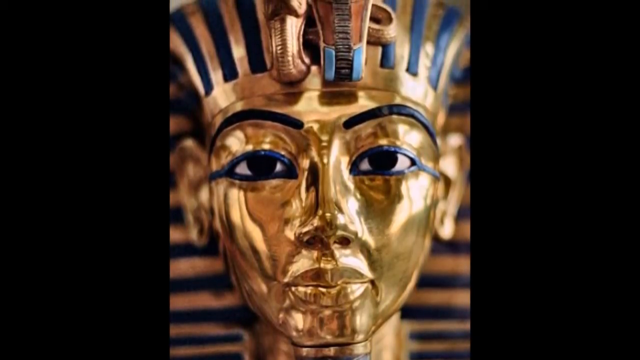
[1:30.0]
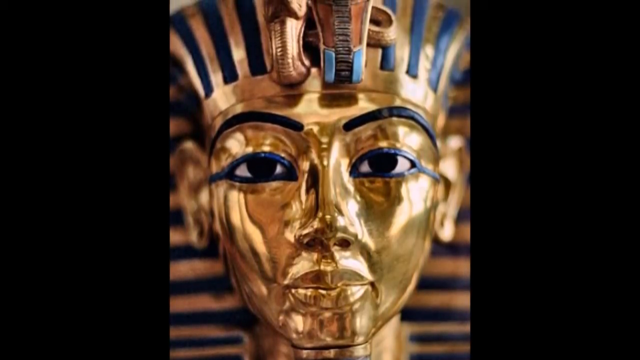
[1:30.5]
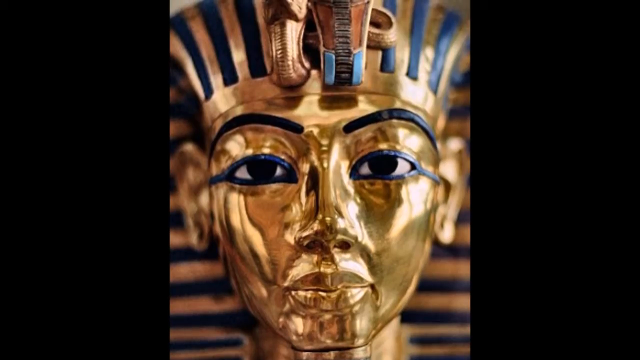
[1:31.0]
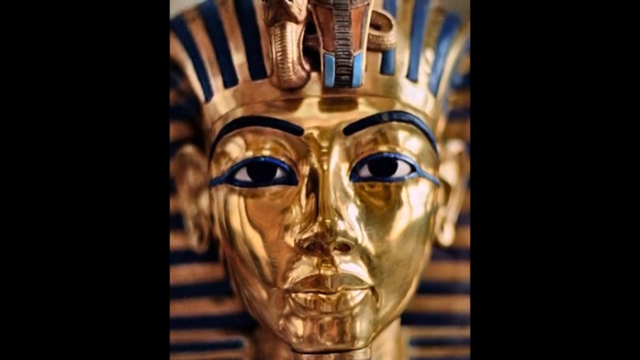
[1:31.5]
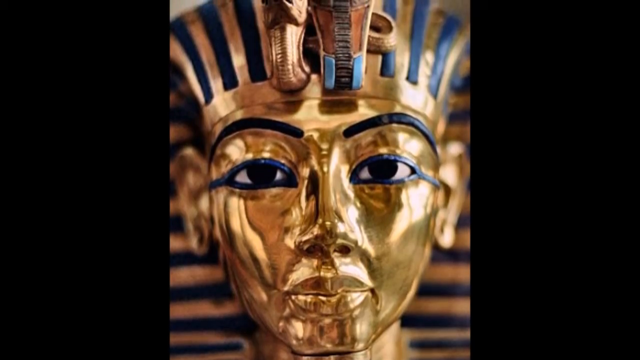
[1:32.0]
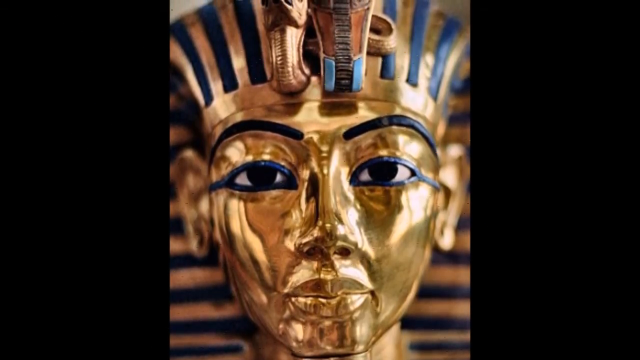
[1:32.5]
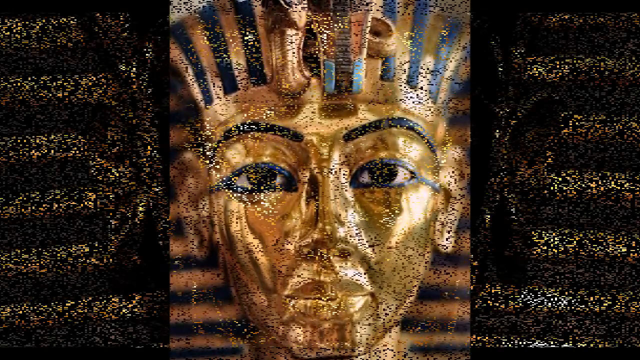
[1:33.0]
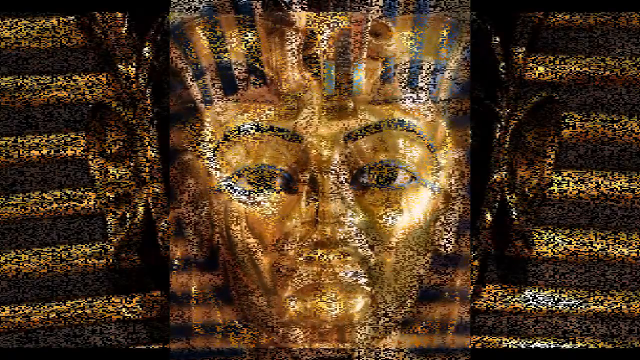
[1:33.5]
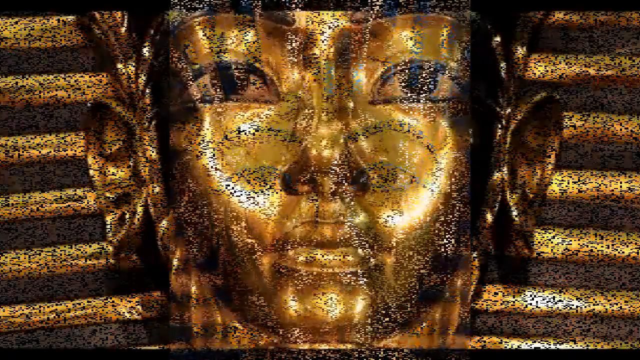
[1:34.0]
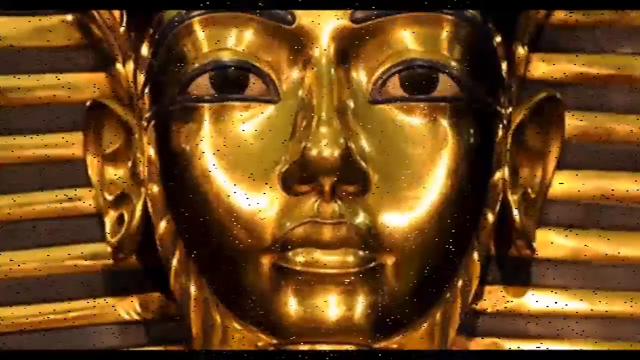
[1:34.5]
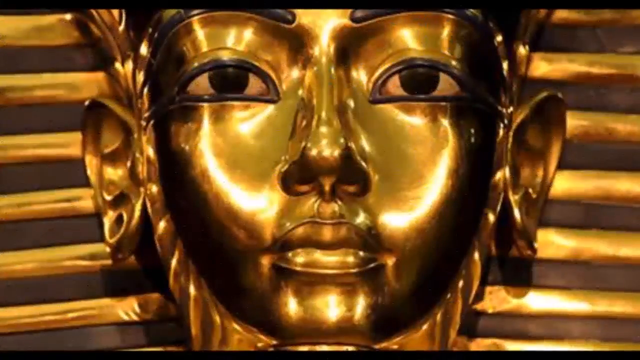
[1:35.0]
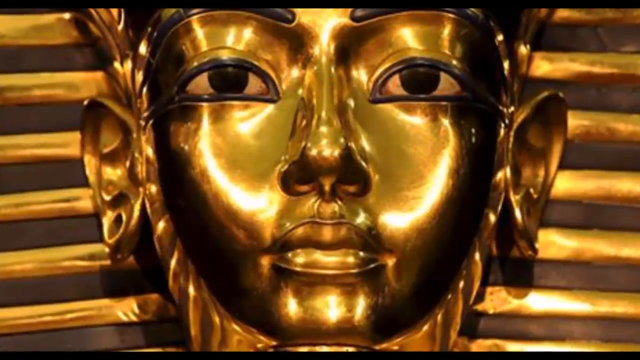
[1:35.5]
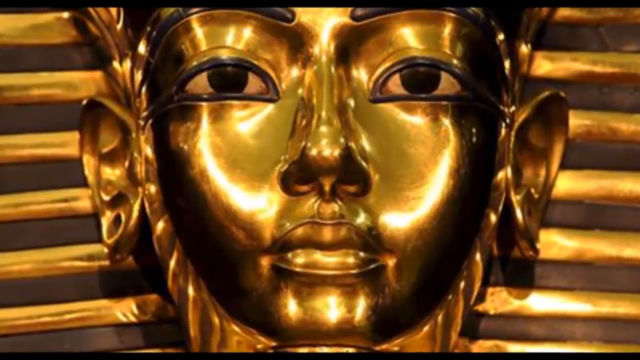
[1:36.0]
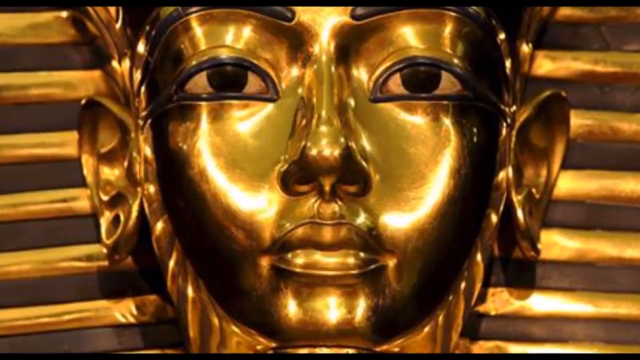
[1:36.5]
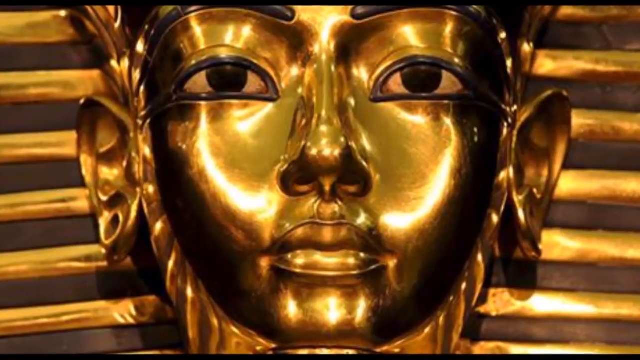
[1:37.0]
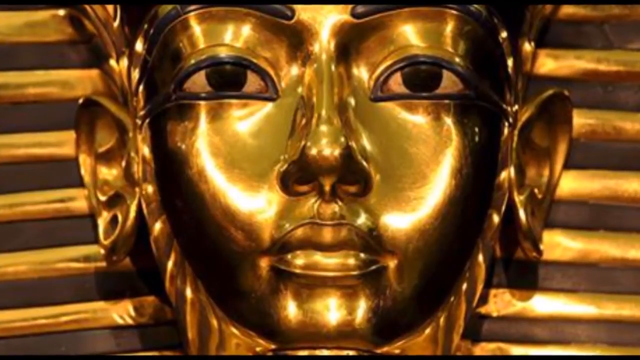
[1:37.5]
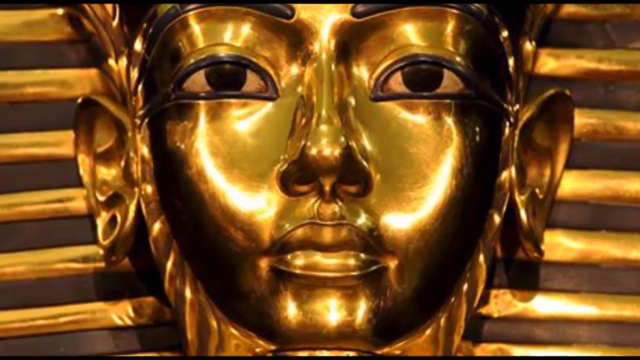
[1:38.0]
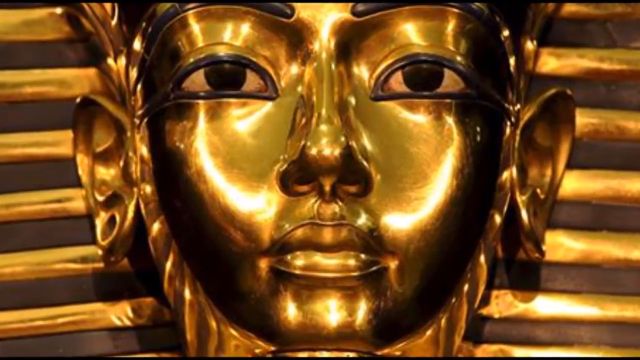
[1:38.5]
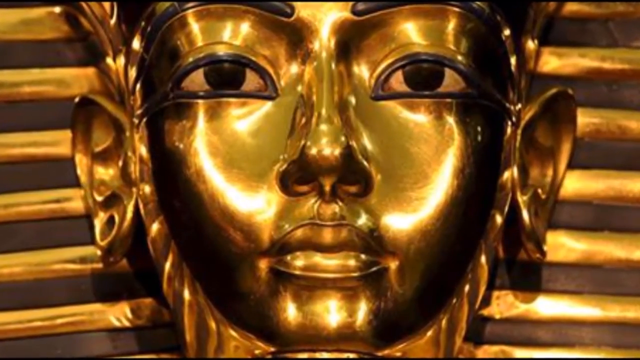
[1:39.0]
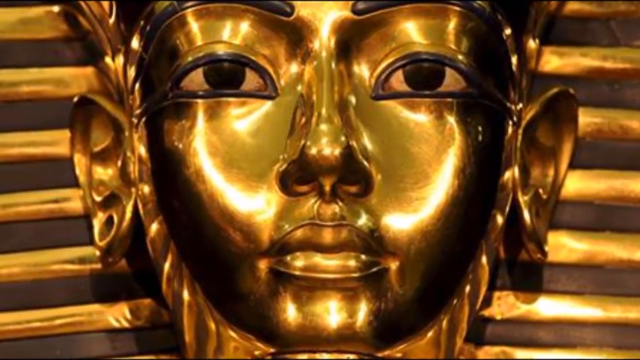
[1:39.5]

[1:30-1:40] A picture shows the golden face of King Tut's tomb, which looks like it has blue eyeliner. At the top of the forehead he appears to wear a headdress with vertical blue and golden lines that turn horizontal behind him. There are two snakes on his forehead, one of which looks like a cobra. The video pans upward, then turns grainy and changes to a zoomed-in view of the tomb face that is all gold with no blue, just some hints of black, giving it a darker tone.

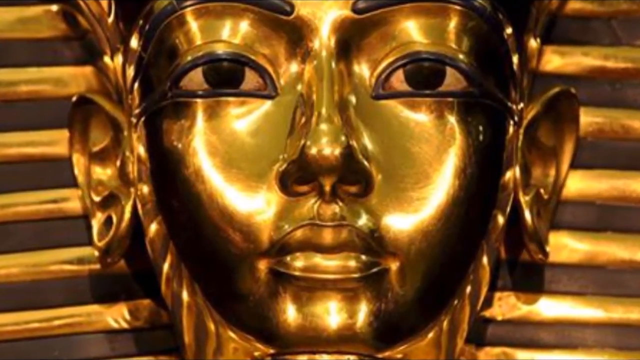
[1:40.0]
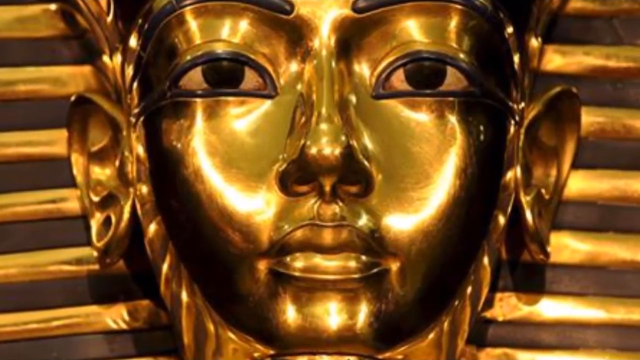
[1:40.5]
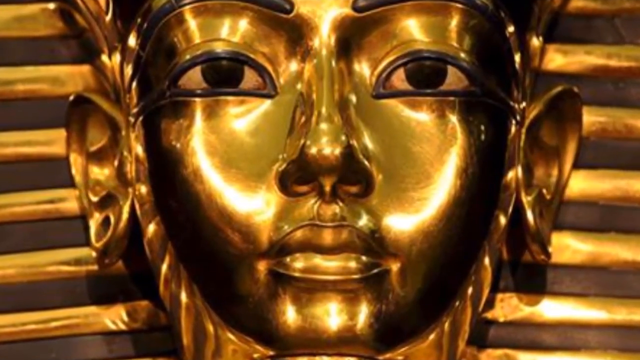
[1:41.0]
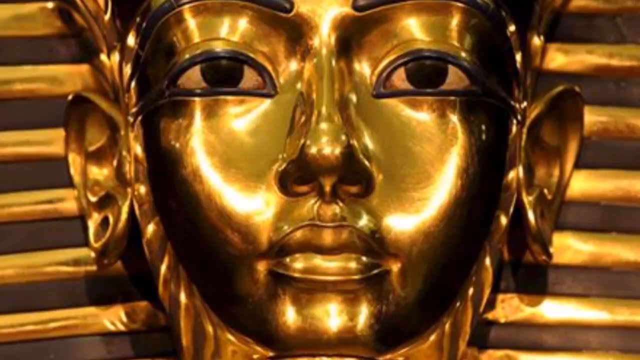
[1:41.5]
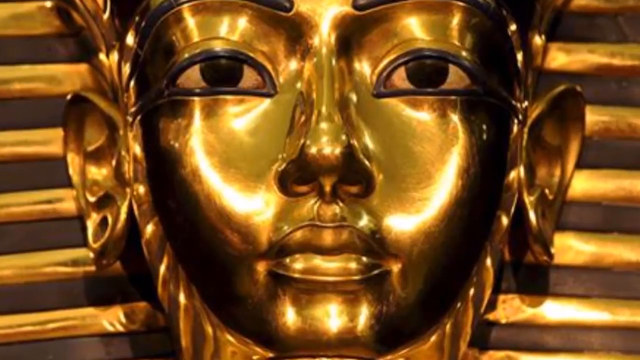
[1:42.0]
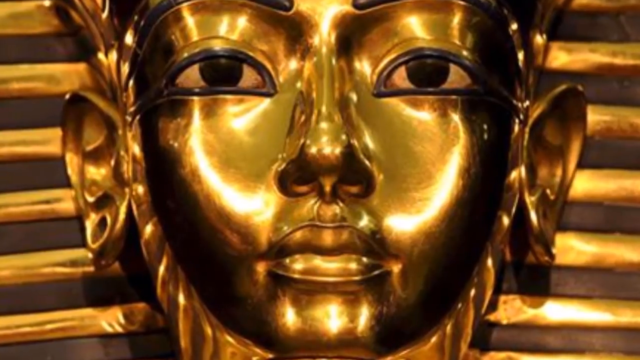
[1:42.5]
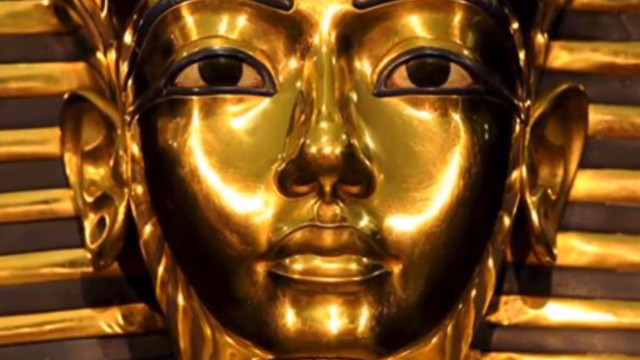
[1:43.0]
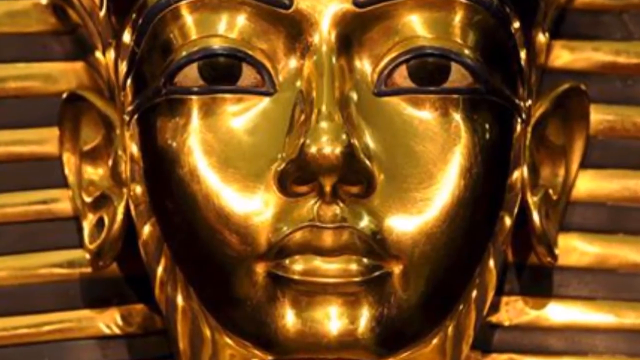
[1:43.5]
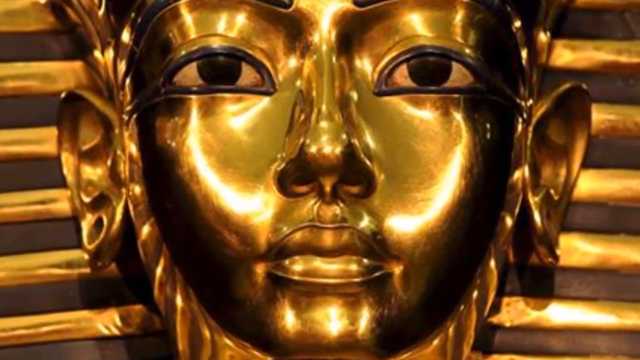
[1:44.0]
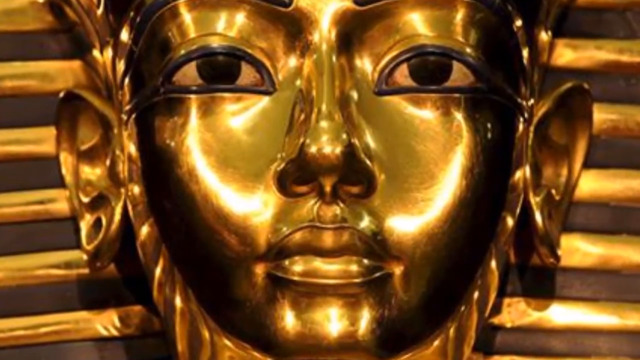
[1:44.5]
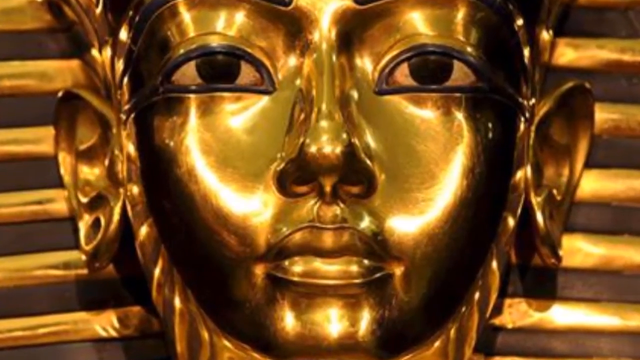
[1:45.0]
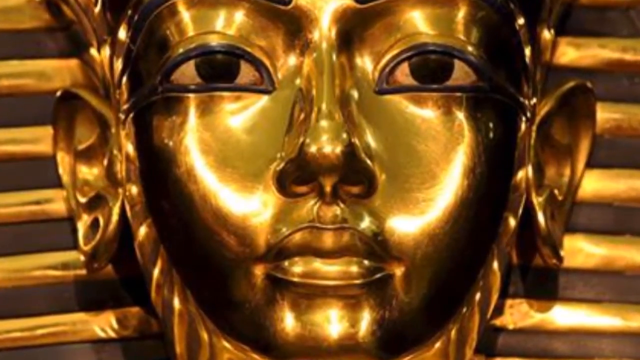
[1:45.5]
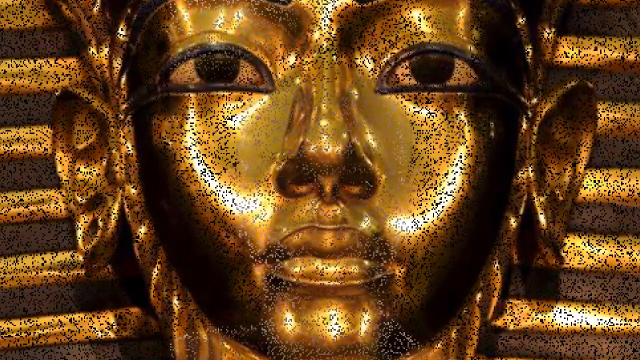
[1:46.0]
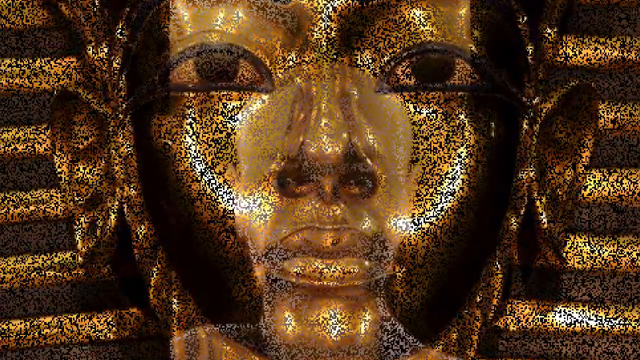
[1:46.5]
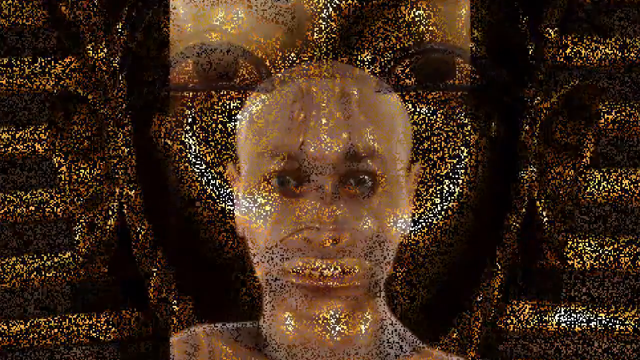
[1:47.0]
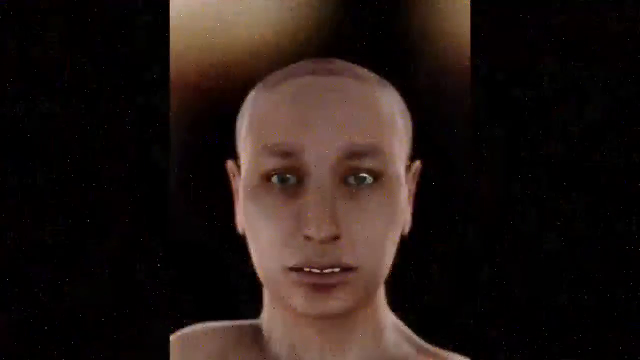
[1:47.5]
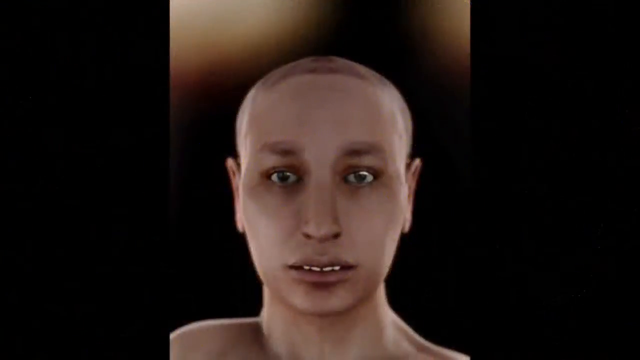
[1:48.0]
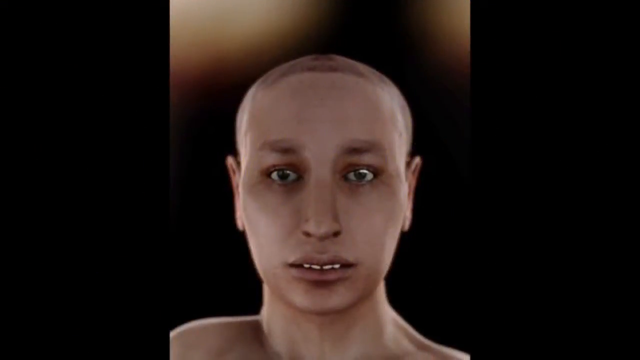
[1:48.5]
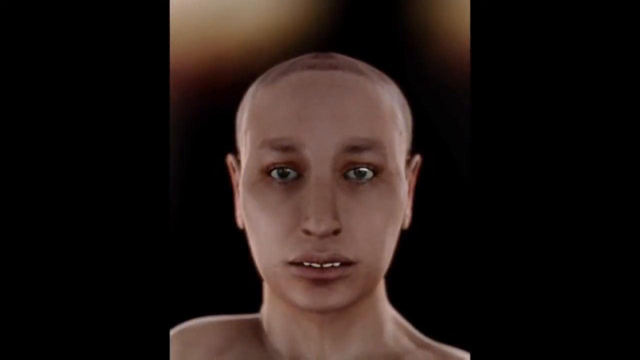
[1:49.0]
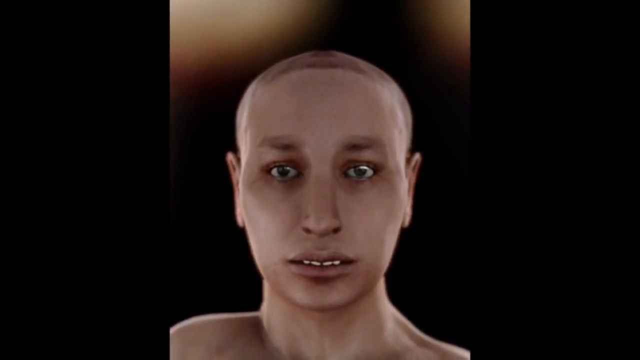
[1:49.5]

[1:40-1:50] A zoomed-in view shows King Tut's golden burial face, gold with a very dark tone that looks dark gray rather than blue. The eyeline and eyebrows are dark gray, and horizontal gold and dark gray lines are in the back. A grainy transition leads to a 3D picture of what looks like an adolescent boy's face. He appears to be in his teenage years, with very short hair or no hair, shaved like a skinhead, and green eyes. He seems to wear nothing, as his bare shoulders are visible up to his face, and his top four teeth, the front two and the two beside them, are visible.